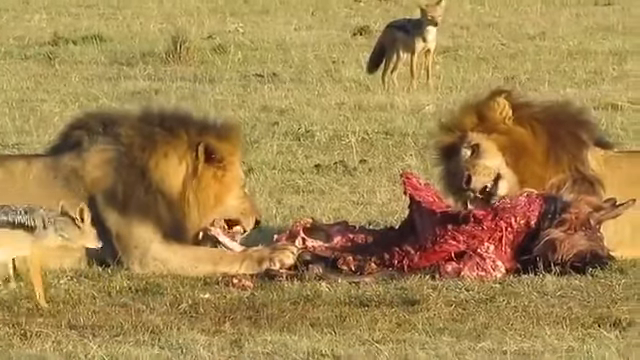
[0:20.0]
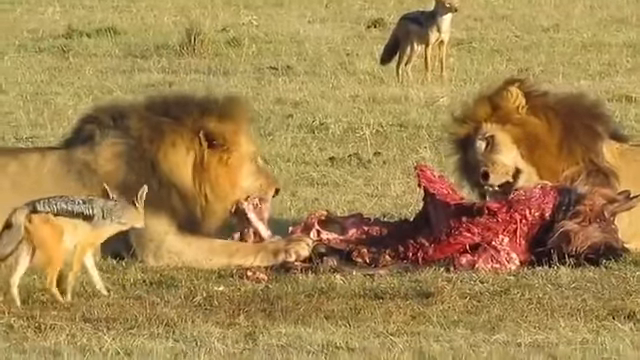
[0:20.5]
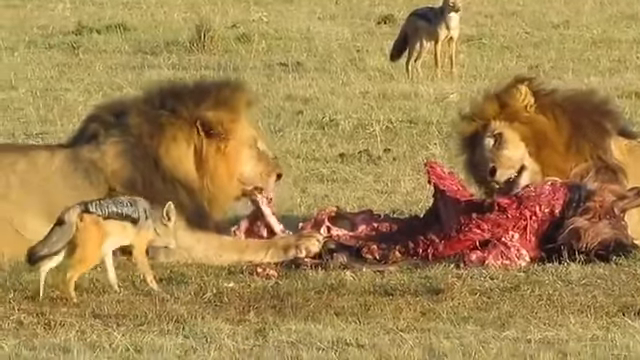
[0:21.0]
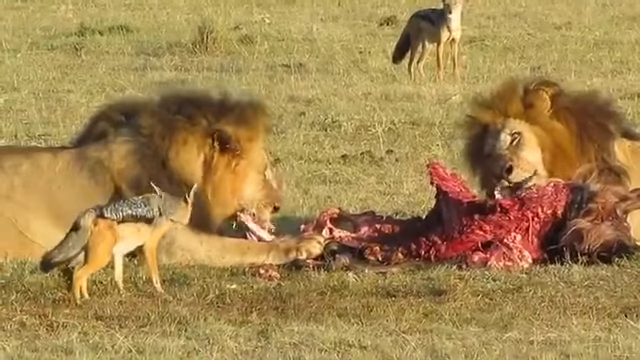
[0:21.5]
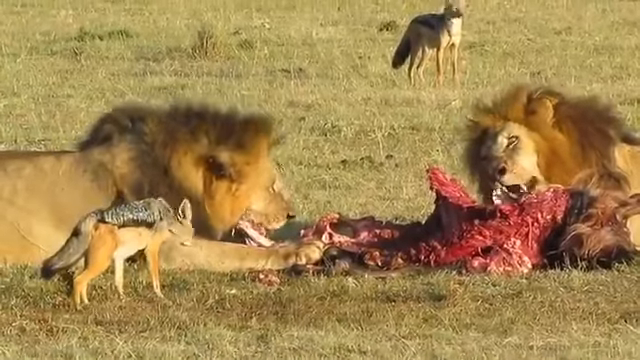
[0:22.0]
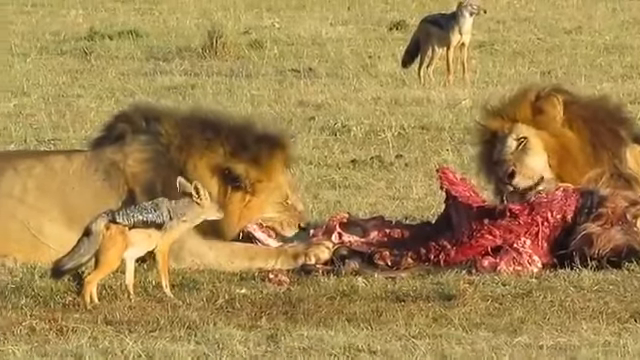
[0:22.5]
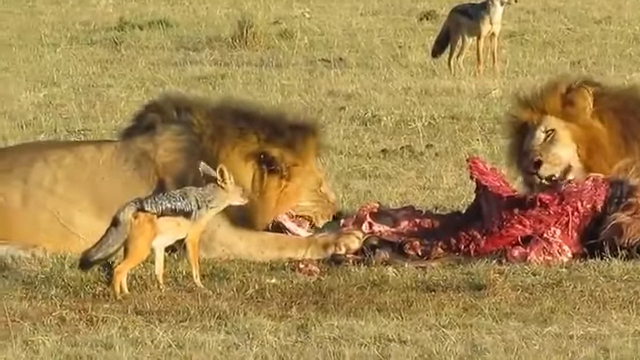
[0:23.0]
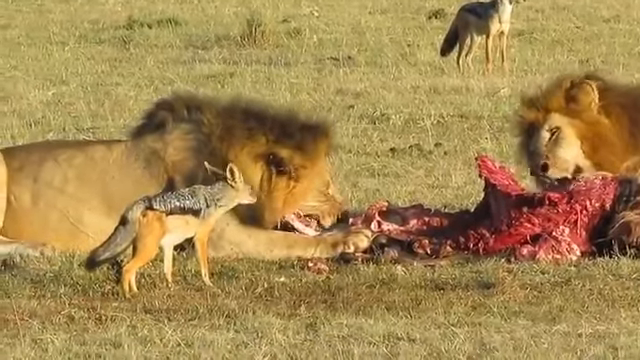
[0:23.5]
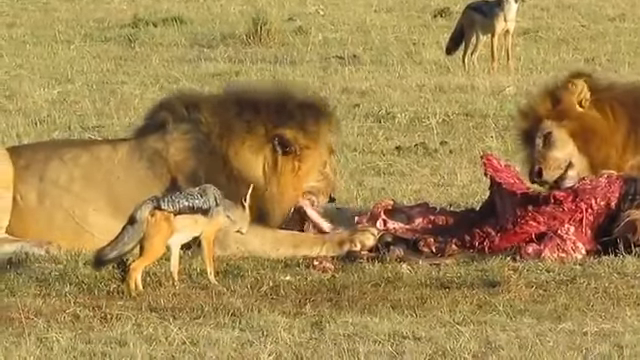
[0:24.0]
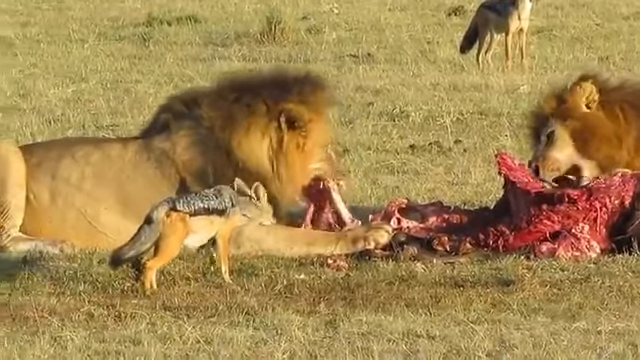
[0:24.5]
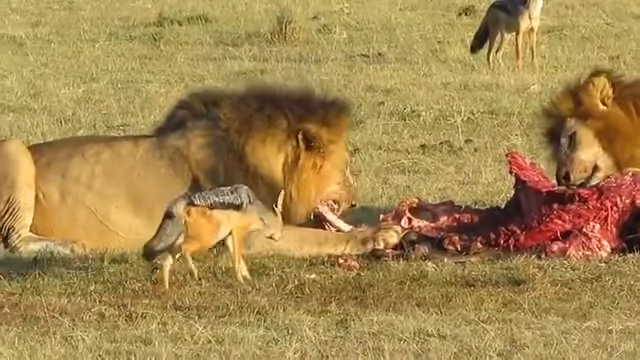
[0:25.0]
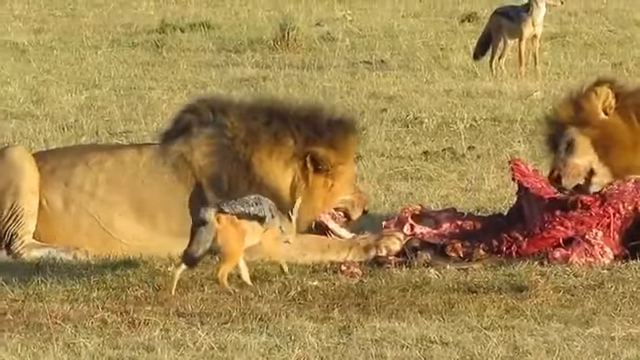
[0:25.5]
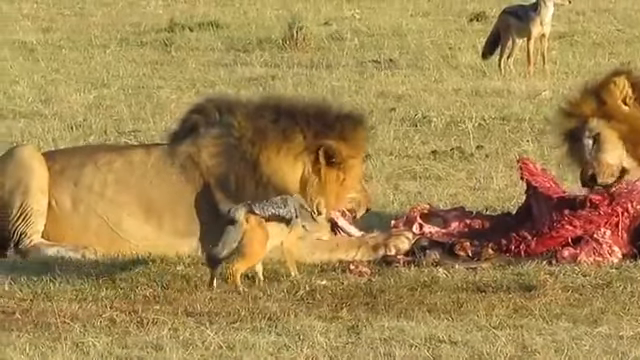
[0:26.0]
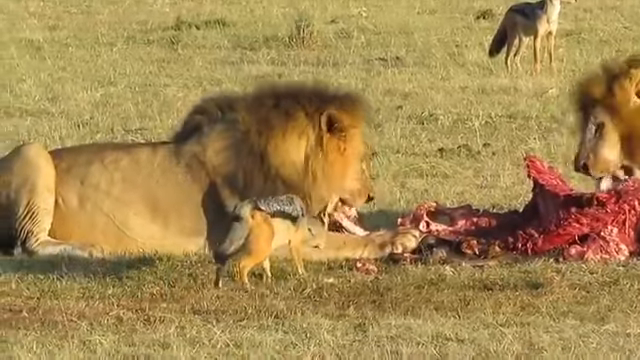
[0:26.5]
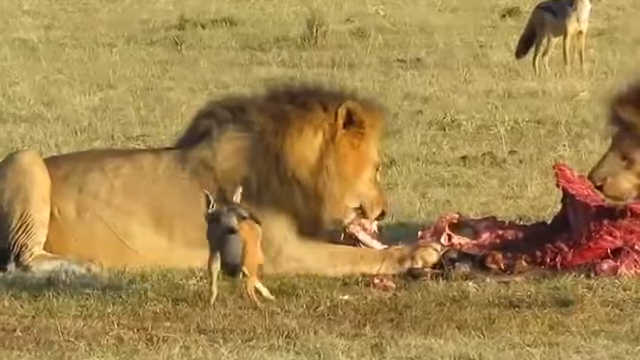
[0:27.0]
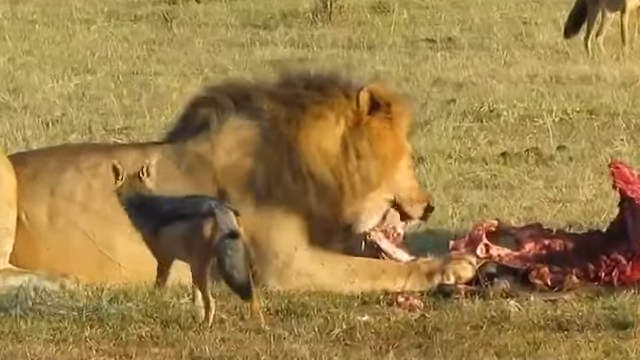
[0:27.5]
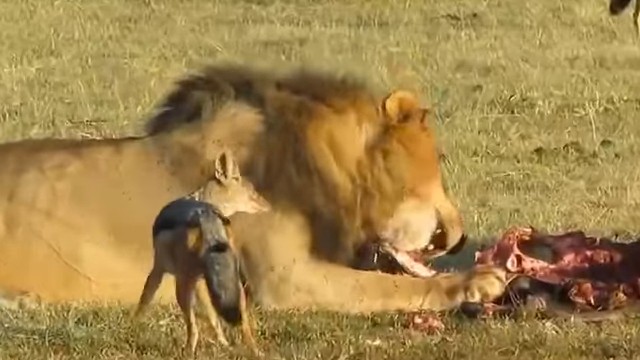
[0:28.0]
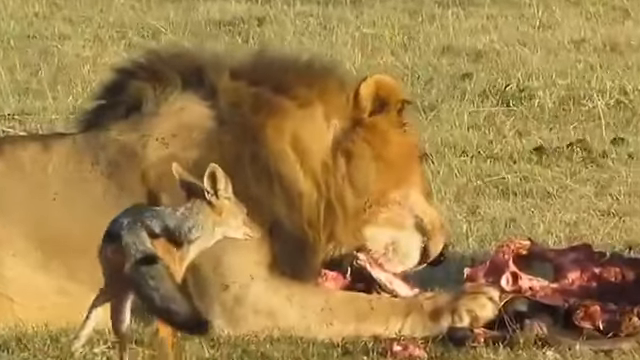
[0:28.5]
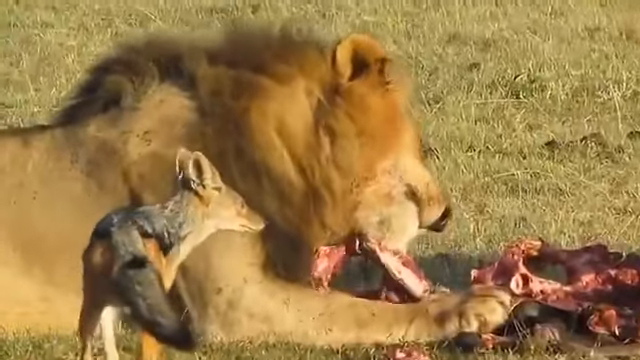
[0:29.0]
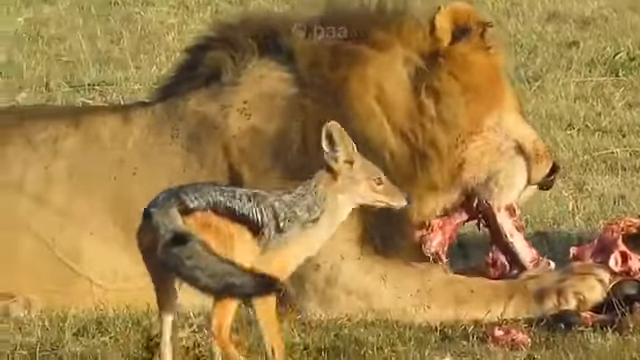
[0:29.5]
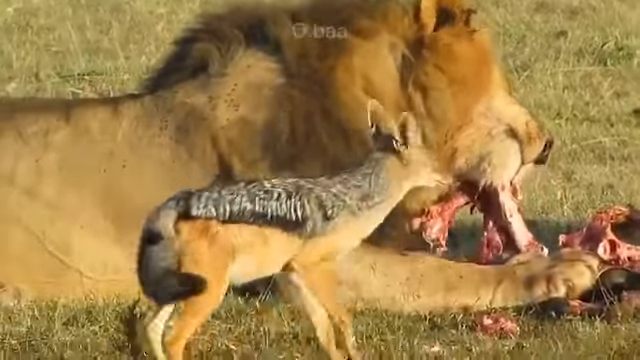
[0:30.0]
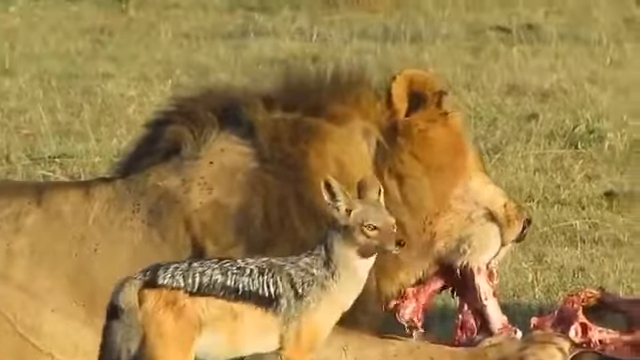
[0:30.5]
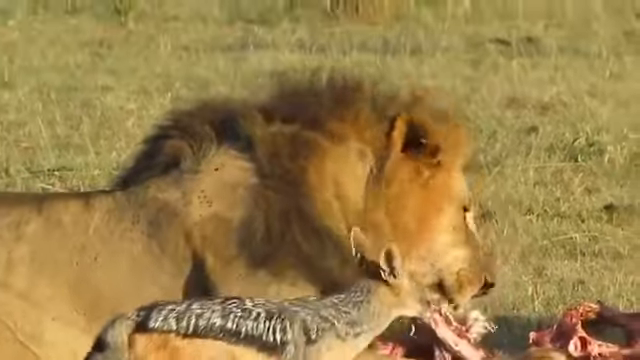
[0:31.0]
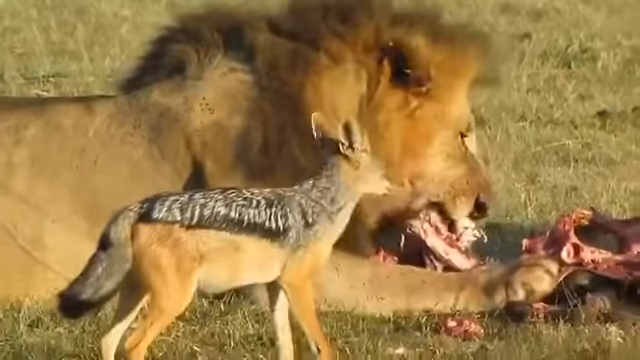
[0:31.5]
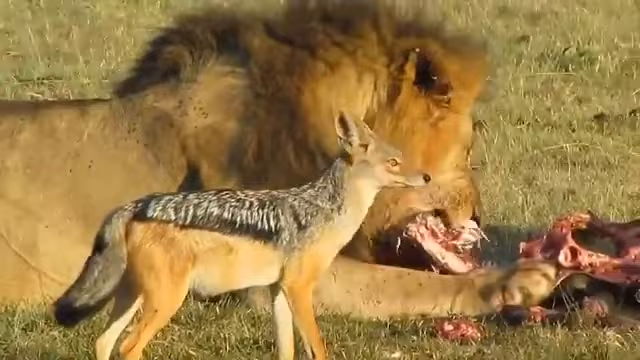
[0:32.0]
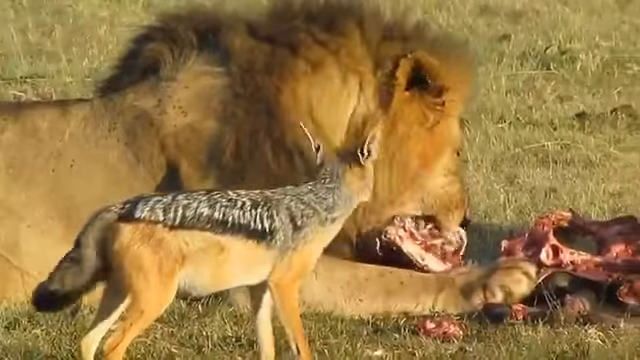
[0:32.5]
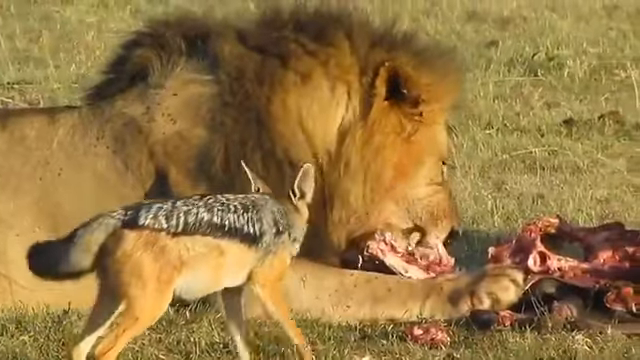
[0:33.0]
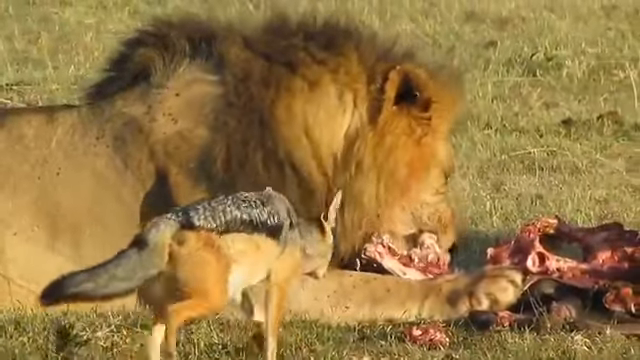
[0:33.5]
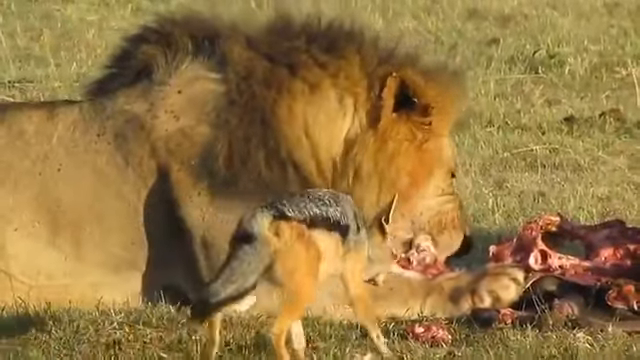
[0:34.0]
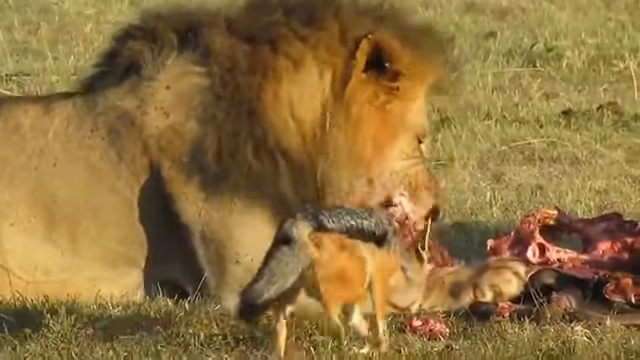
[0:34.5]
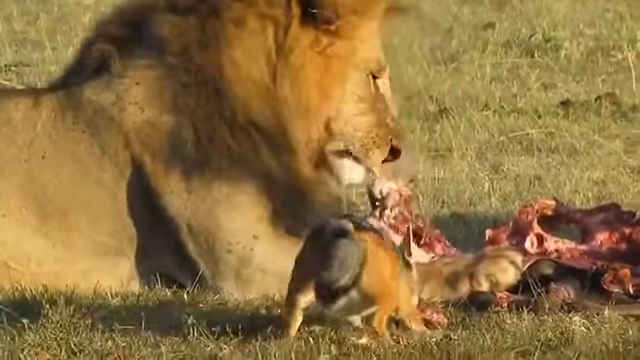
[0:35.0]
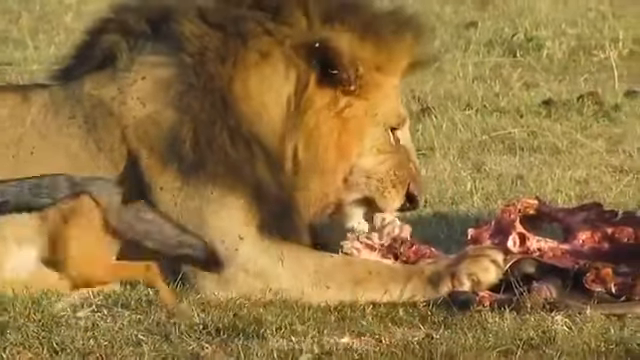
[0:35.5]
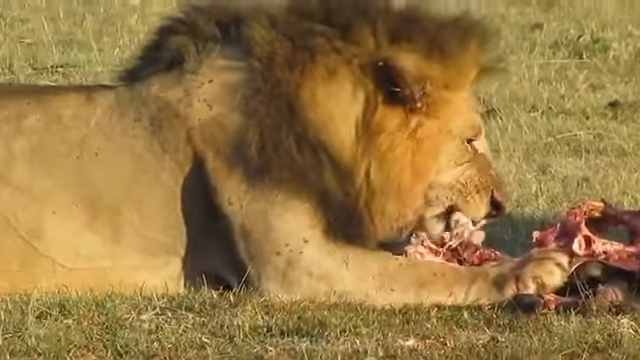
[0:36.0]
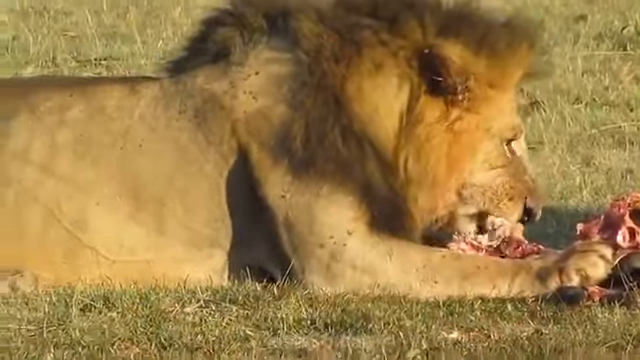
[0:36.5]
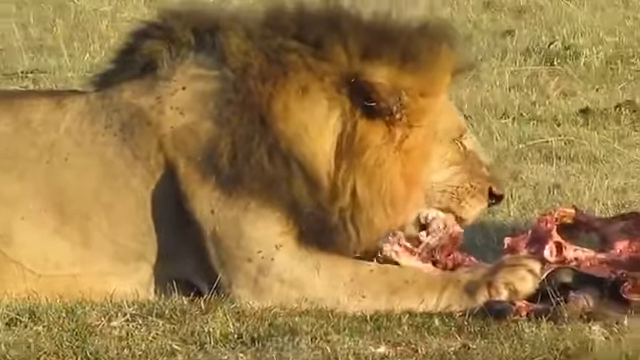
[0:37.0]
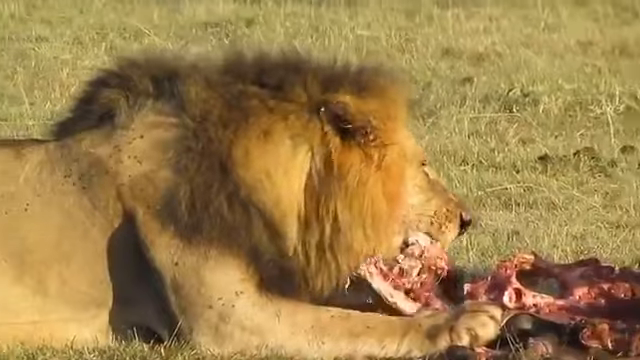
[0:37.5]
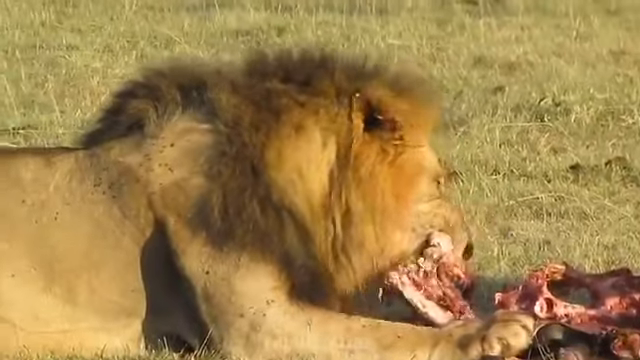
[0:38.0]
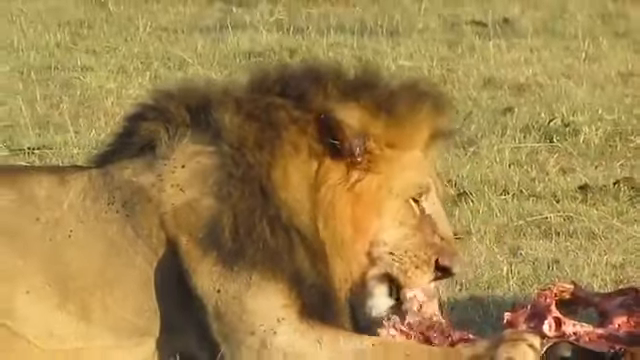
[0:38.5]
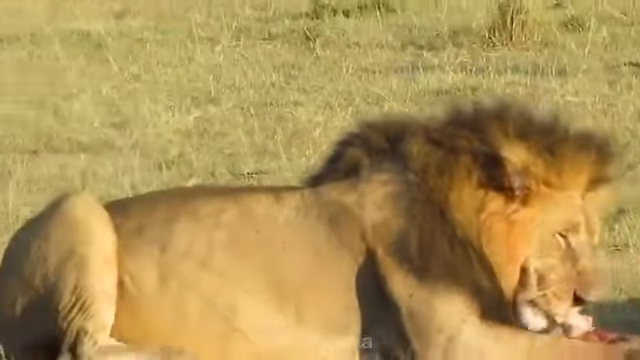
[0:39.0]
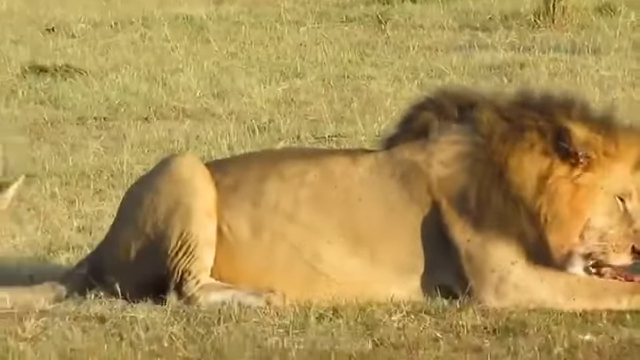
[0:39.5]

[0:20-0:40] Two lions eat in the wild; they look like young lions, with short manes. They feed on the carcass of some wild animal they had previously caught. In the background of the savannah, what looks like a small wild dog waits and watches as the lions eat. On the left side of the frame, a similar wild dog creeps toward the feeding lions as if trying to get something to eat. It waits and watches them, tries to inch closer, and loses its courage. It stands and stares, getting closer to the lion, then darts away in fear toward the left side. That wild dog then takes a bite out of some meat it was apparently able to steal from the lions. The other wild dog in the background just stands and waits for its time to eat.